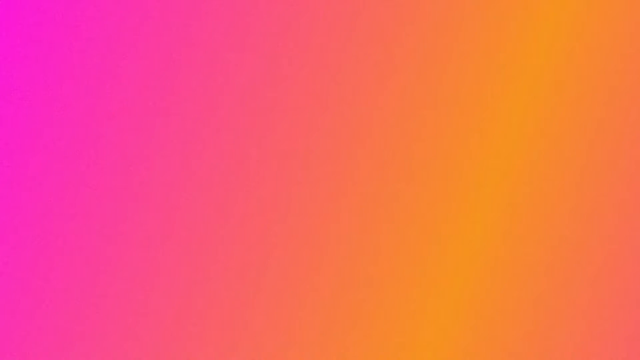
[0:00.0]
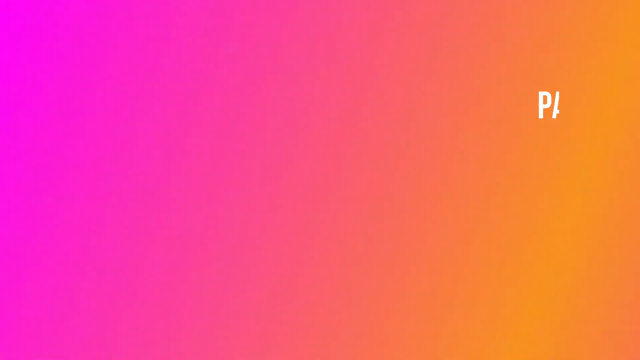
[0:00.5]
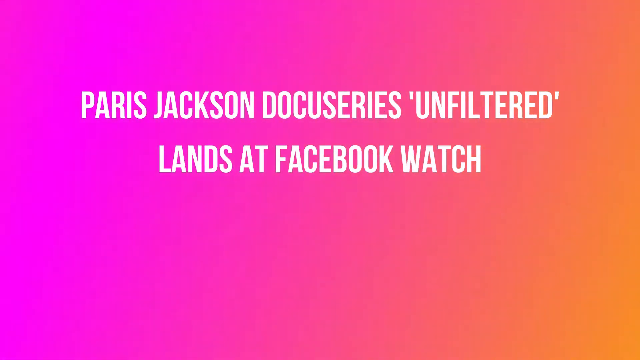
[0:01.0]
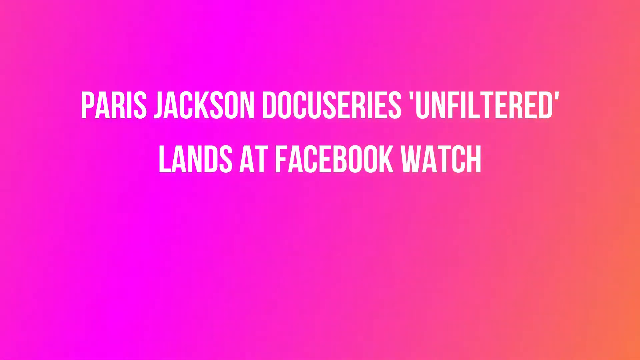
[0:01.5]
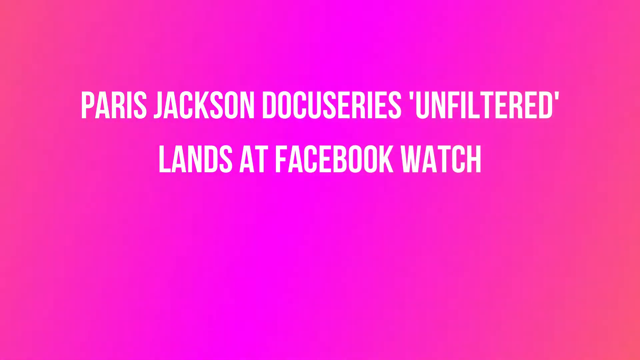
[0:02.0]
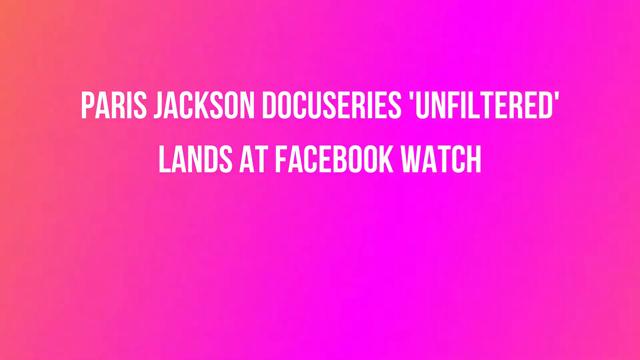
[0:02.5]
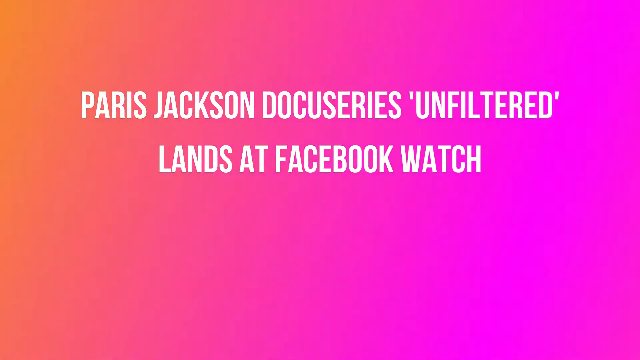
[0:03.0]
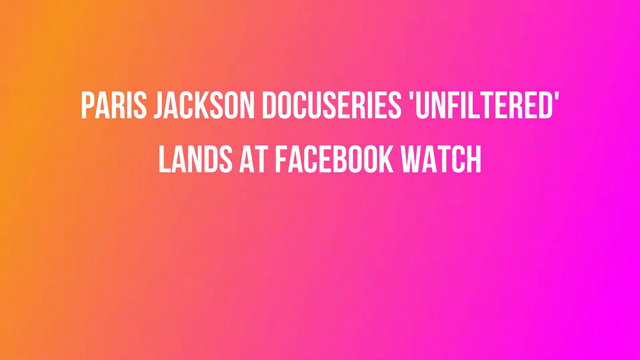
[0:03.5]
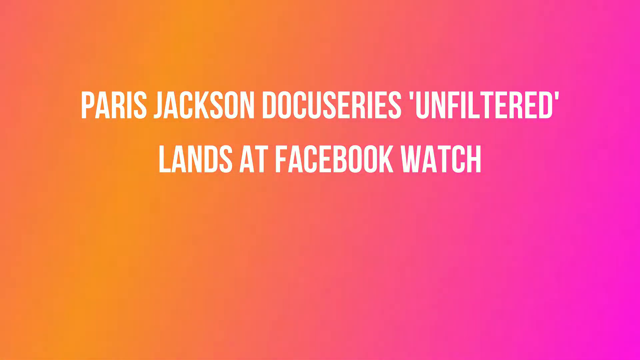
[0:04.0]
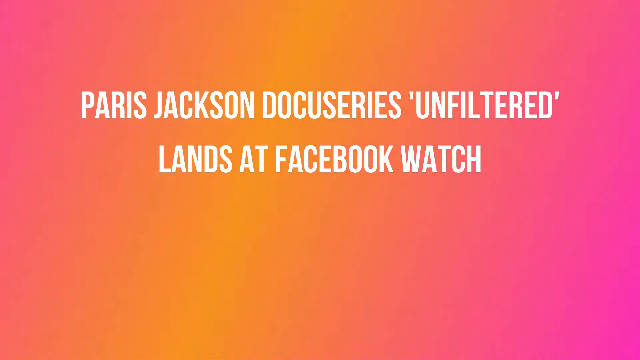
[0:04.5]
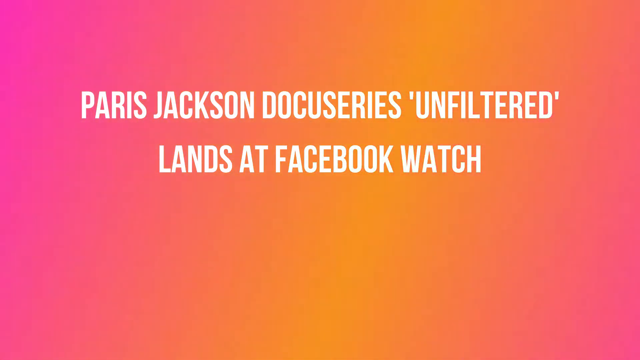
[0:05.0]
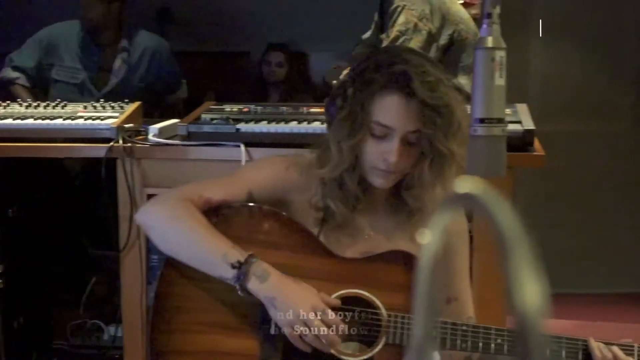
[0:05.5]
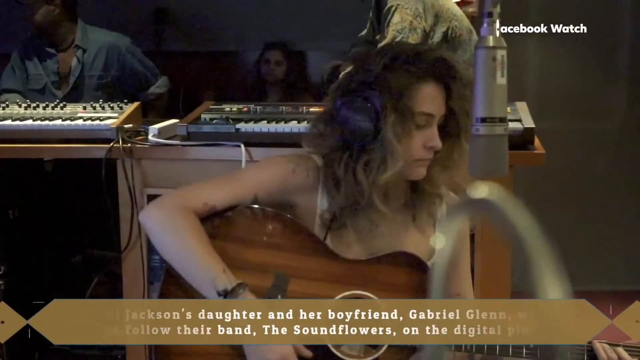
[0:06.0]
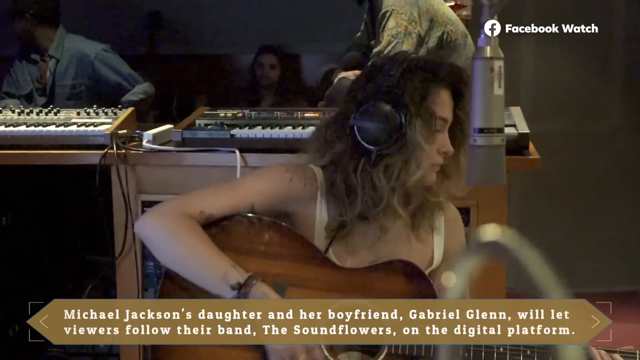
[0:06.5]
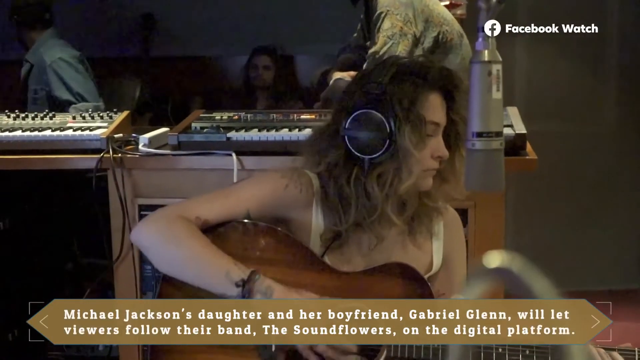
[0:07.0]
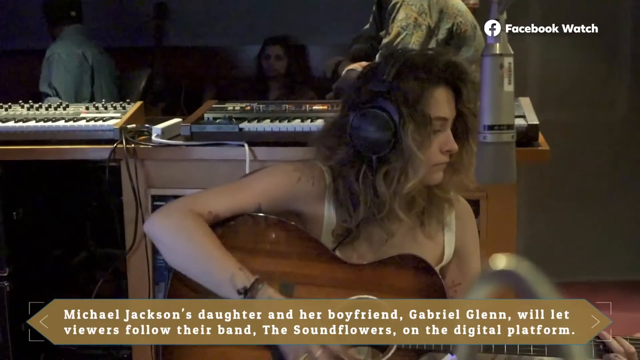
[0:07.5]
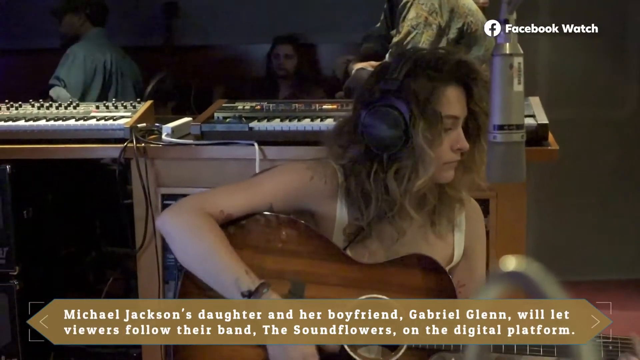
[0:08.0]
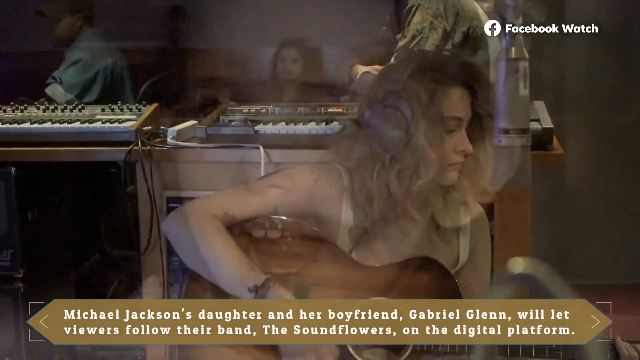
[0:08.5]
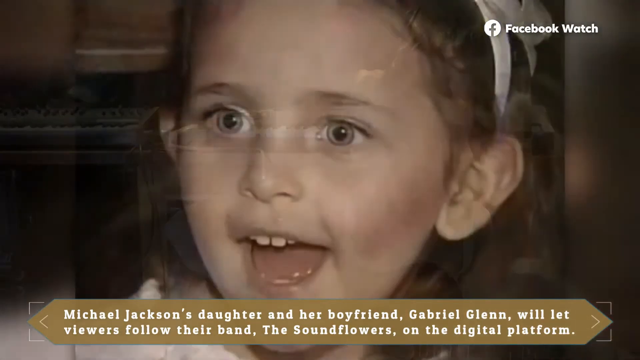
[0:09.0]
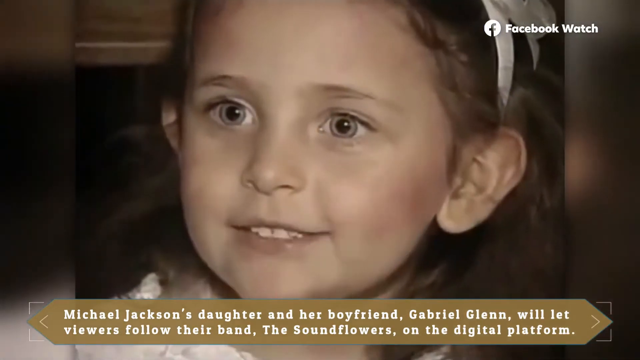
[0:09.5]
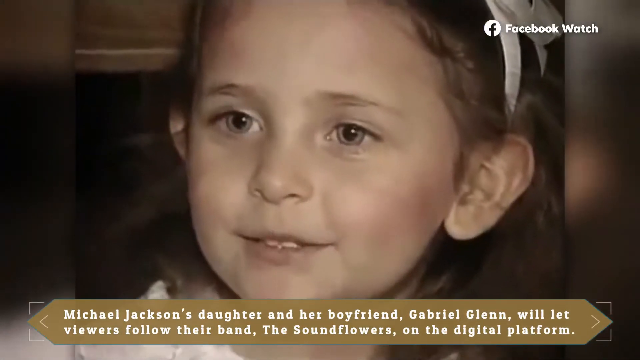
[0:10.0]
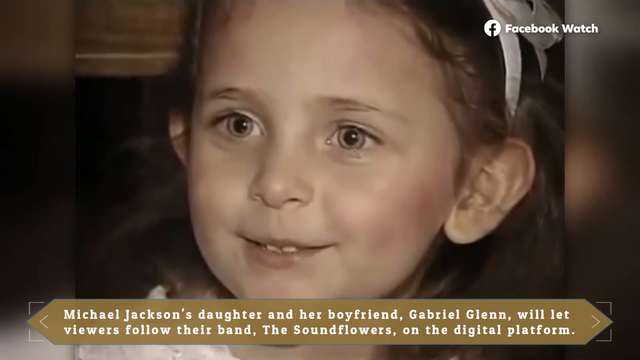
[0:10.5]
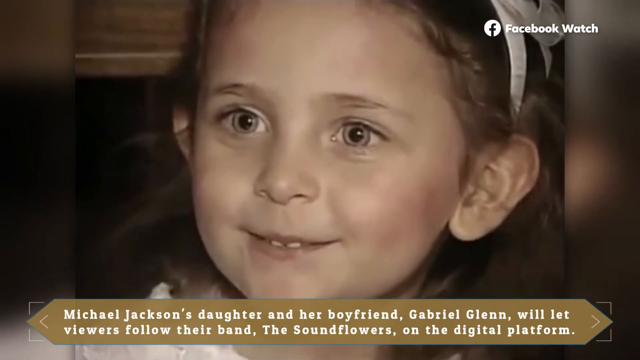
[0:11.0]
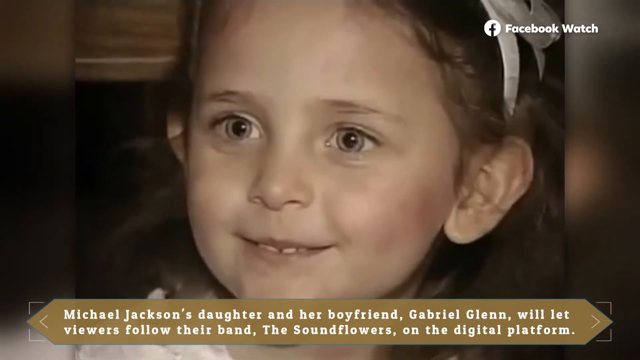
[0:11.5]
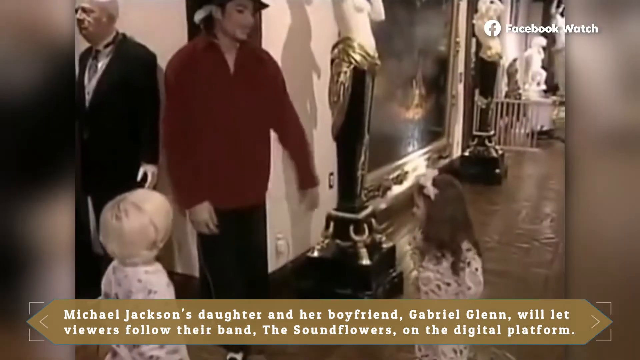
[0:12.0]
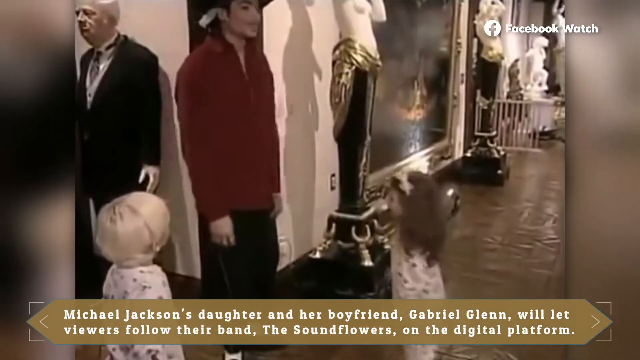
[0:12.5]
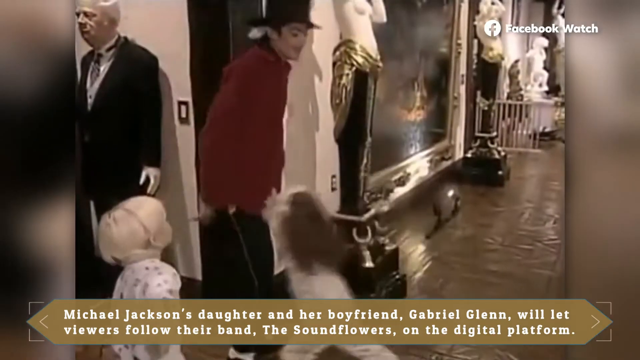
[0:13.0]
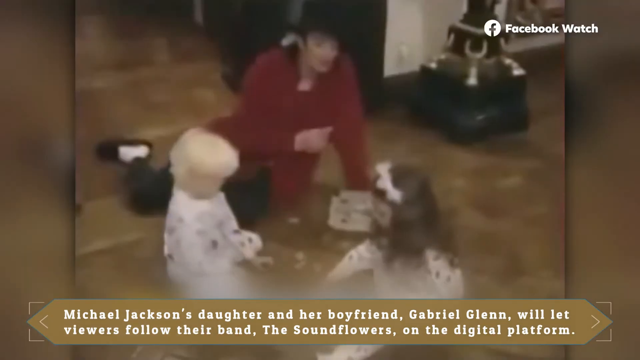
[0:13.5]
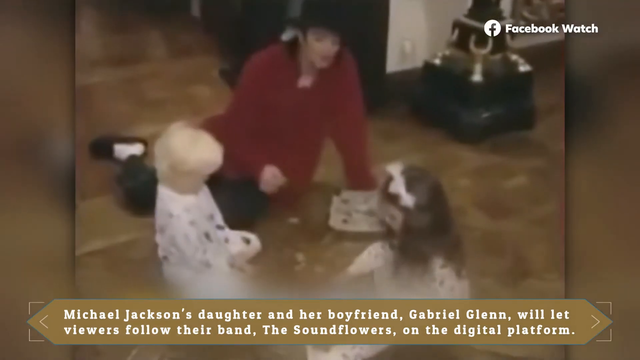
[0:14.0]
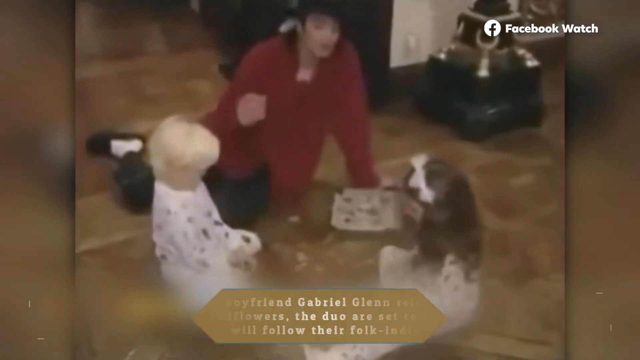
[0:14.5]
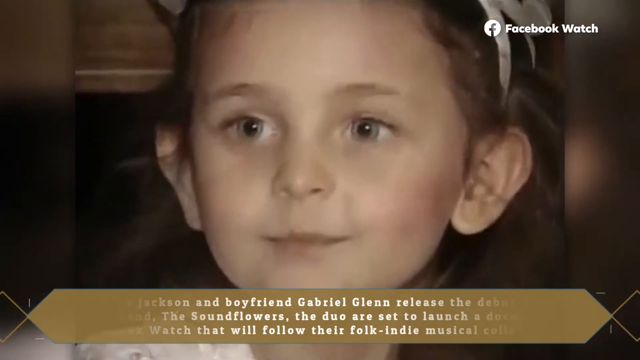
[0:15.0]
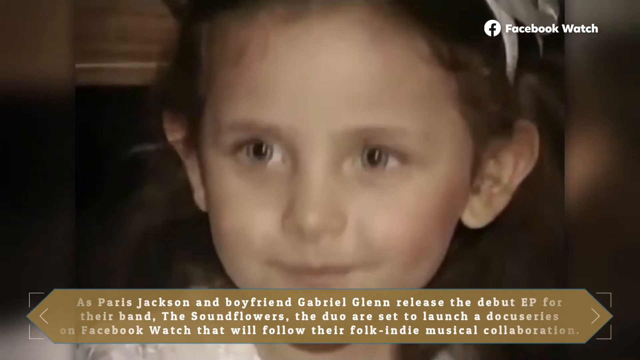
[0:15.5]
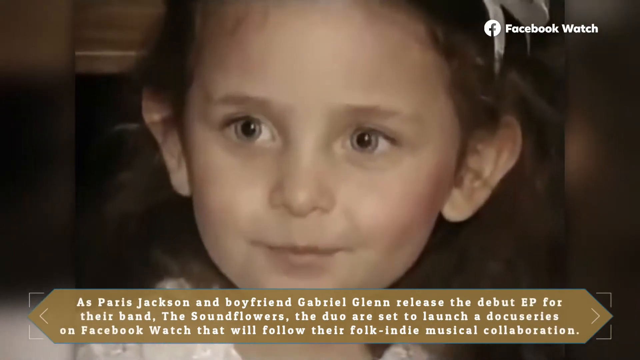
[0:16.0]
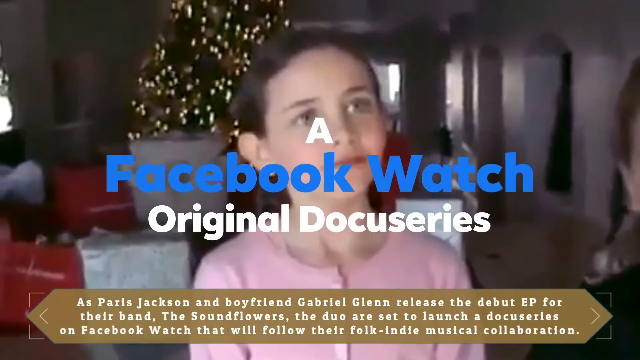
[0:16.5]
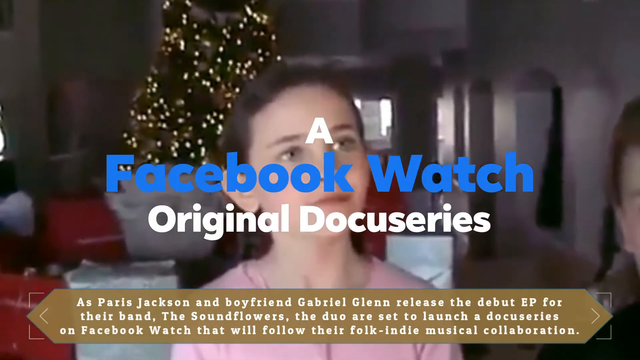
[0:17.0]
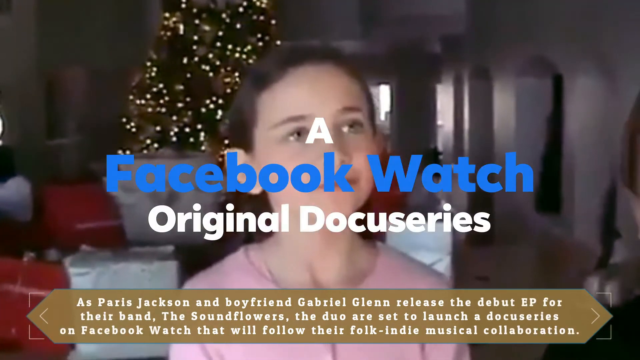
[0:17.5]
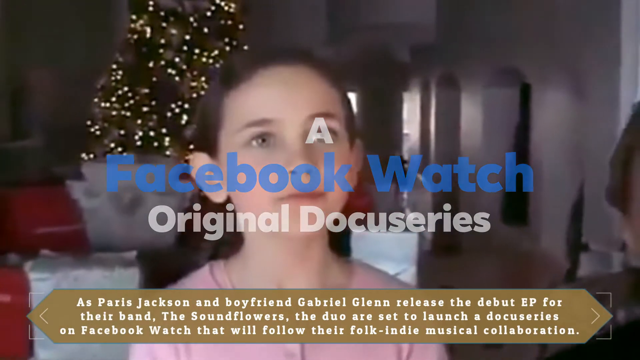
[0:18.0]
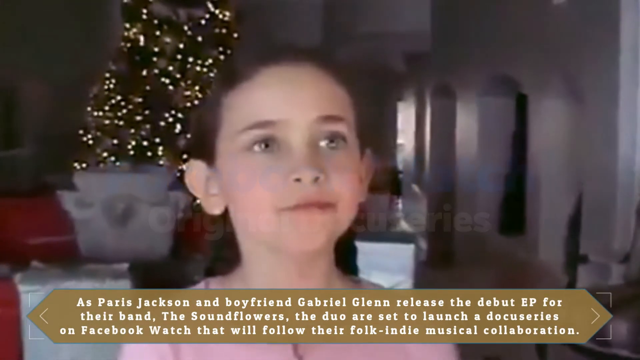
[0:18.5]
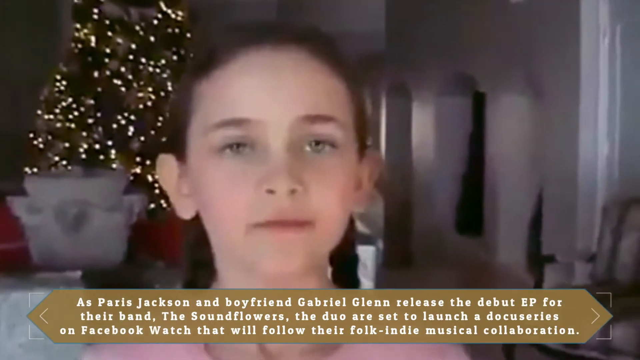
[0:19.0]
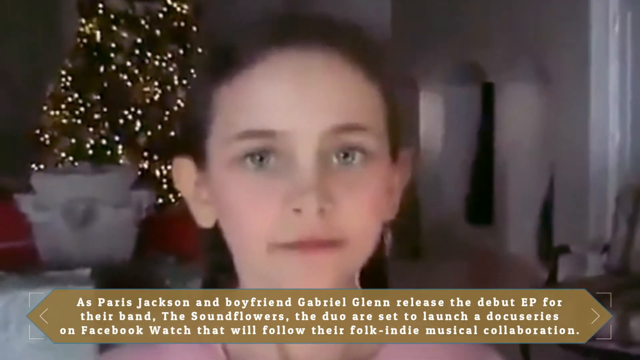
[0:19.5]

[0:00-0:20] The video opens on a pink and purple background. Bold, all-capital white text reads "Paris Jackson's docuseries unfiltered lands at Facebook Watch." The woman, apparently Michael Jackson's daughter, then appears, and text says "Michael Jackson's daughter and her boyfriend Gabriel Glenn will let viewers follow their band The Sound Flowers on the digital platform." Further text reads "Paris Jackson and her boyfriend Gabriel Glenn" and "released the debut EP for their band The Sound Flowers. The duo are set to launch a docu-series on Facebook Watch that will follow their folk indie musical collaborations." The words pop up at the bottom of the screen. Footage shows her as a very little girl playing with her father when he was still alive.